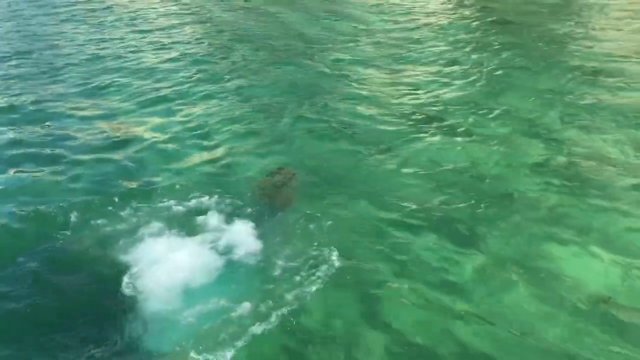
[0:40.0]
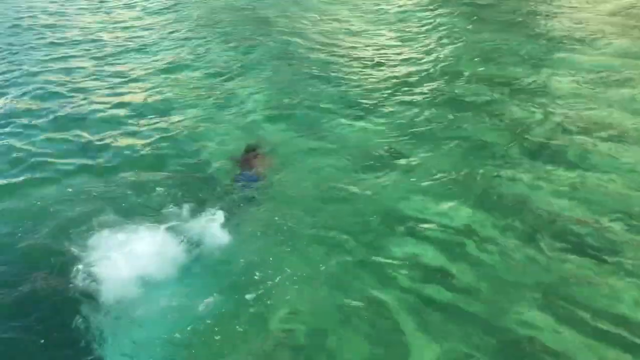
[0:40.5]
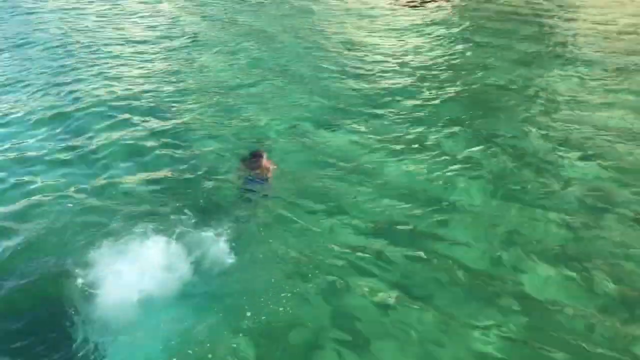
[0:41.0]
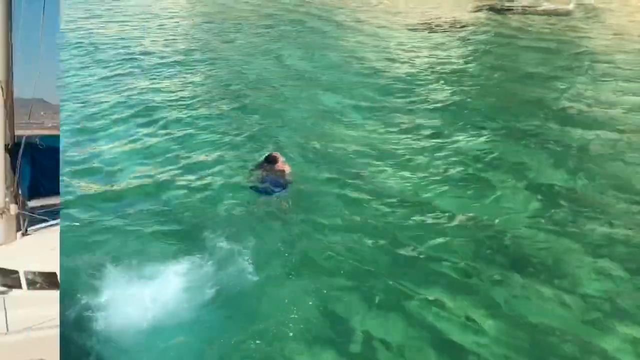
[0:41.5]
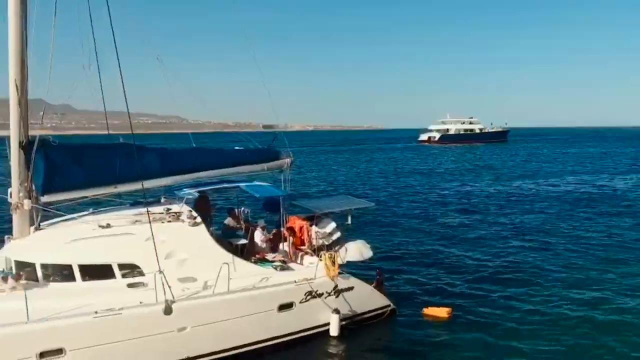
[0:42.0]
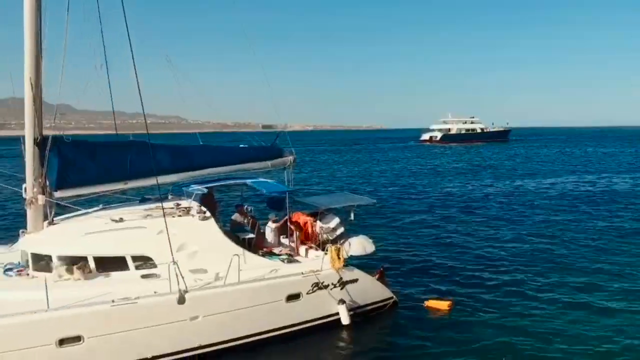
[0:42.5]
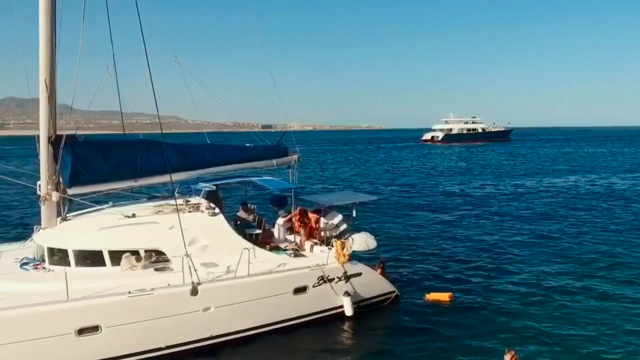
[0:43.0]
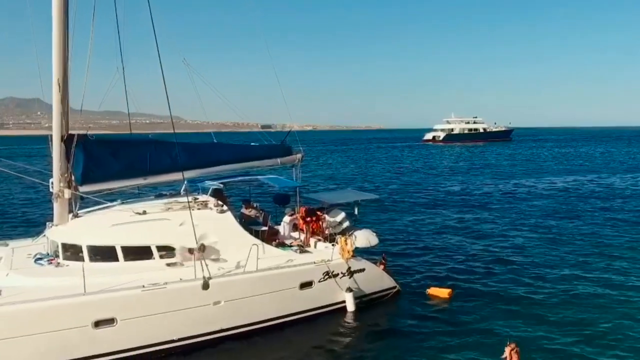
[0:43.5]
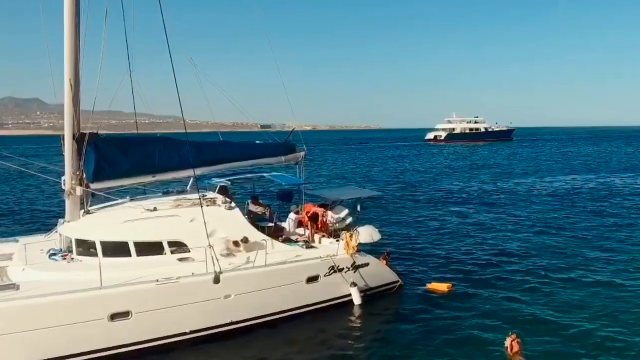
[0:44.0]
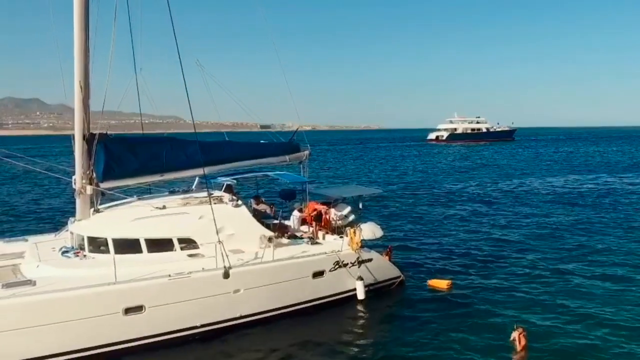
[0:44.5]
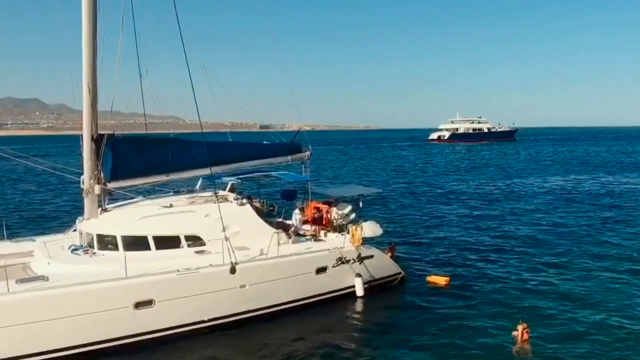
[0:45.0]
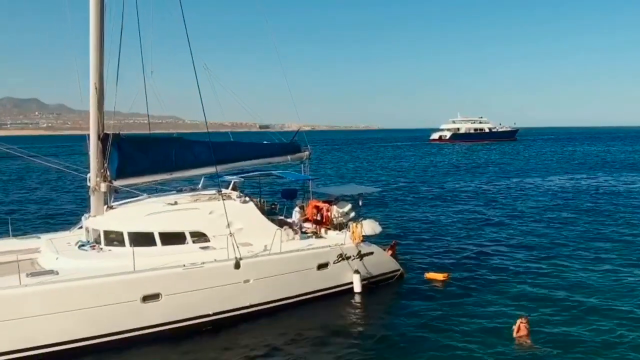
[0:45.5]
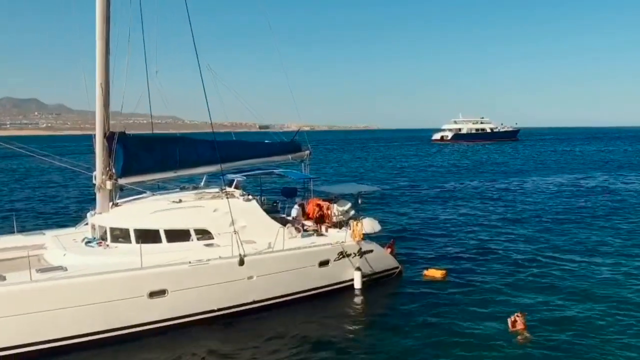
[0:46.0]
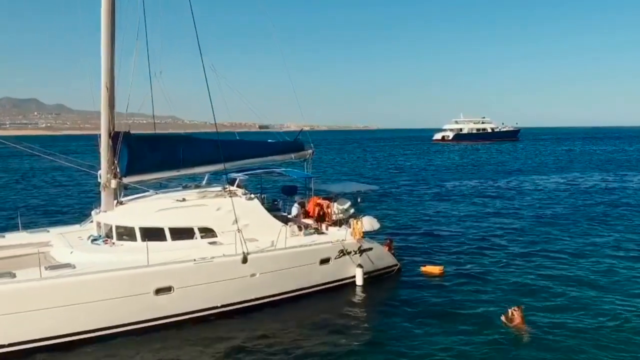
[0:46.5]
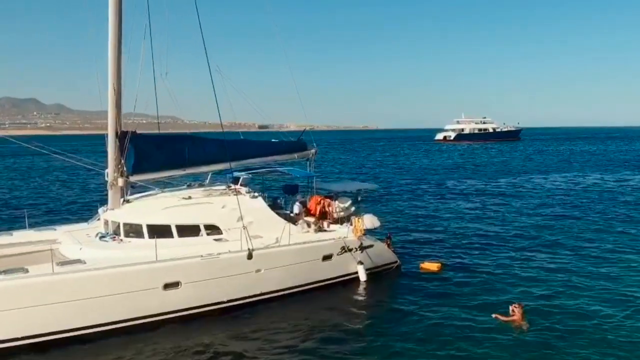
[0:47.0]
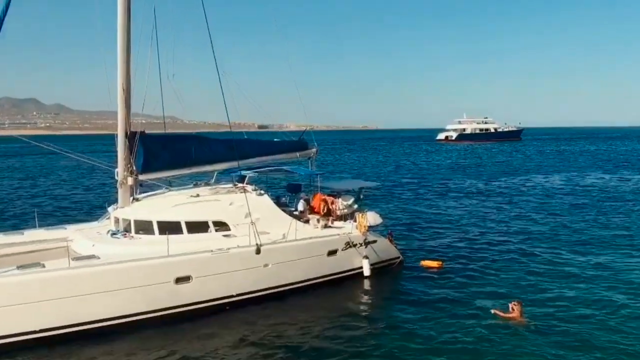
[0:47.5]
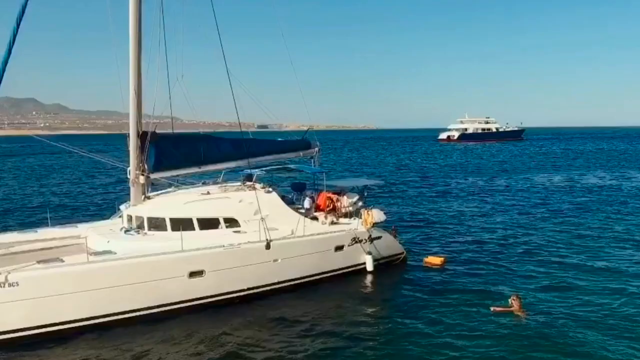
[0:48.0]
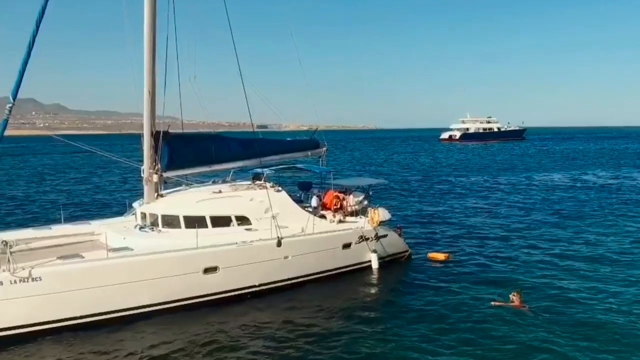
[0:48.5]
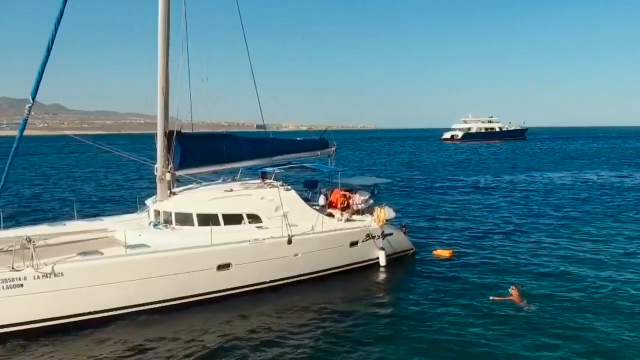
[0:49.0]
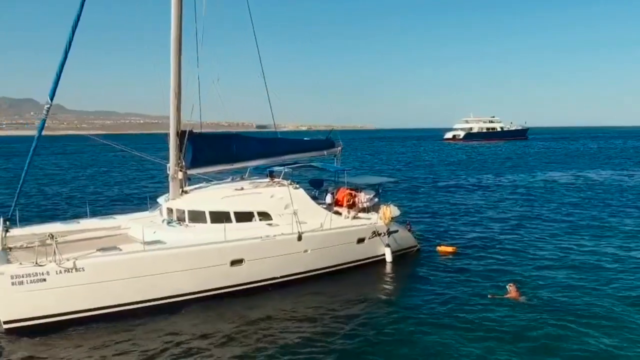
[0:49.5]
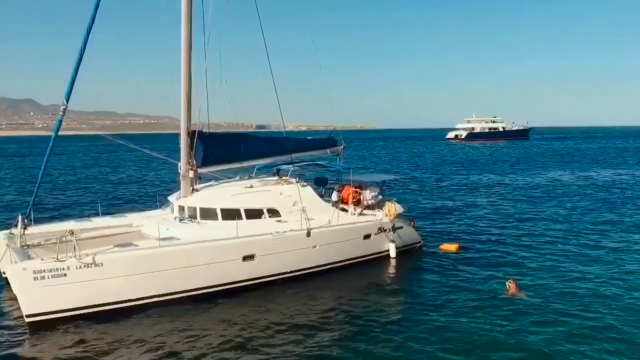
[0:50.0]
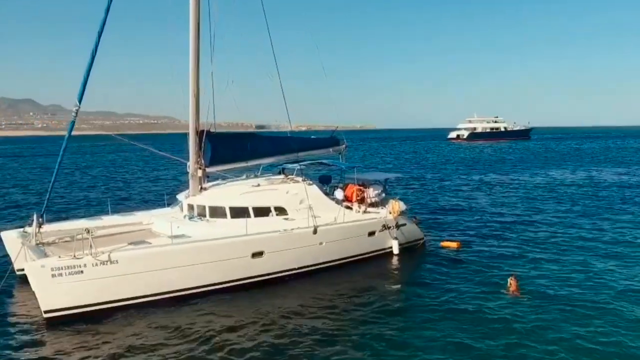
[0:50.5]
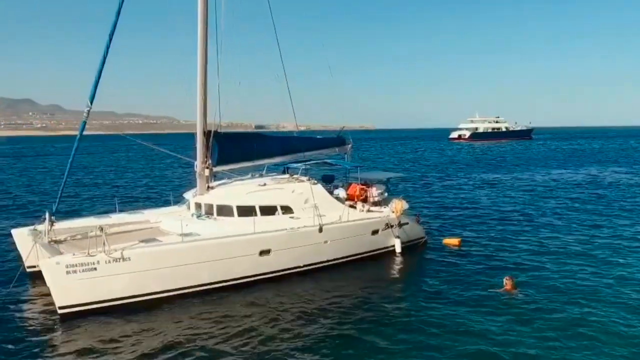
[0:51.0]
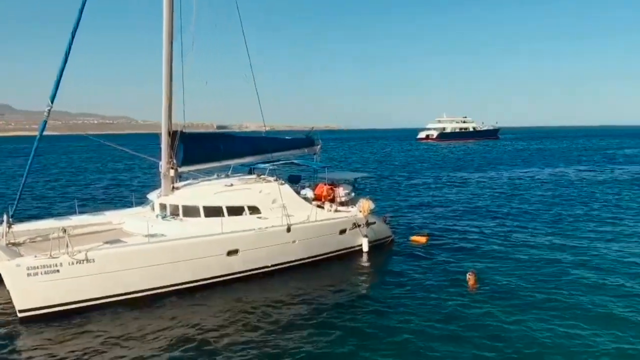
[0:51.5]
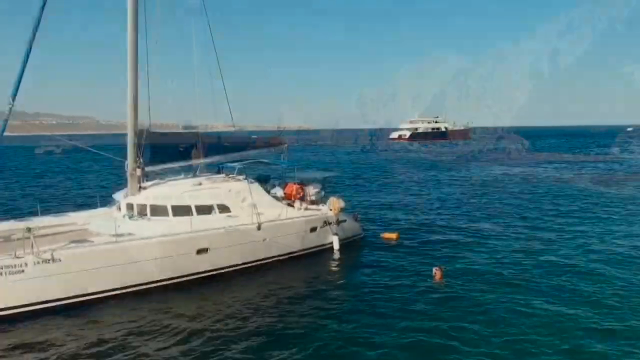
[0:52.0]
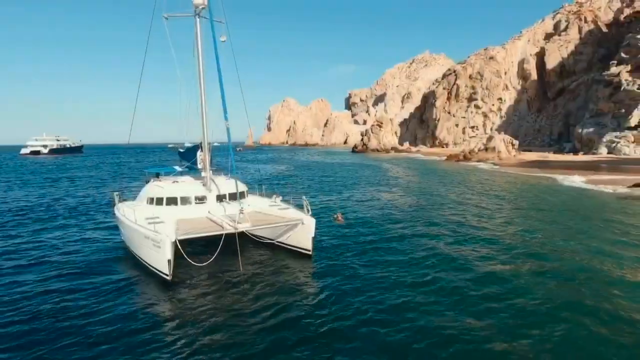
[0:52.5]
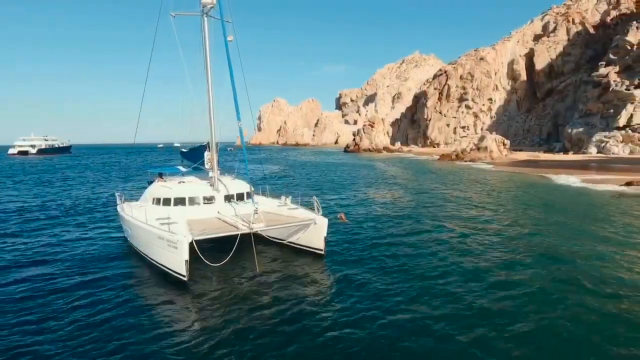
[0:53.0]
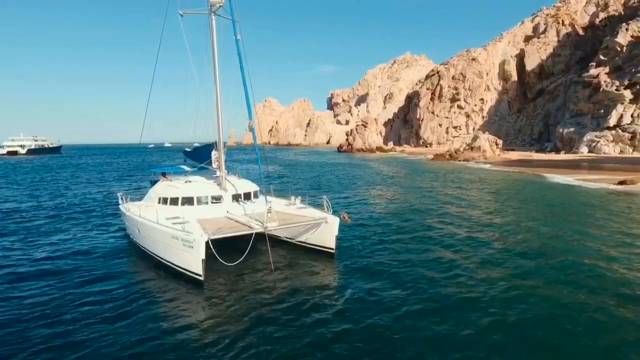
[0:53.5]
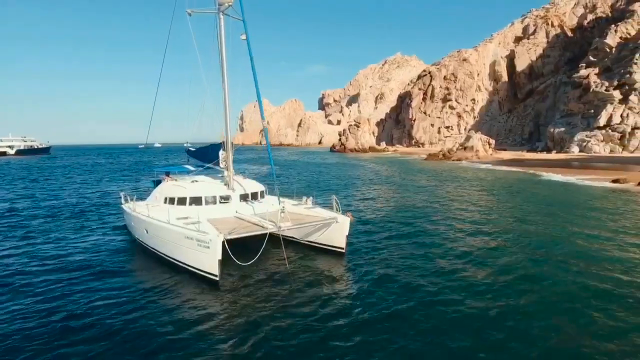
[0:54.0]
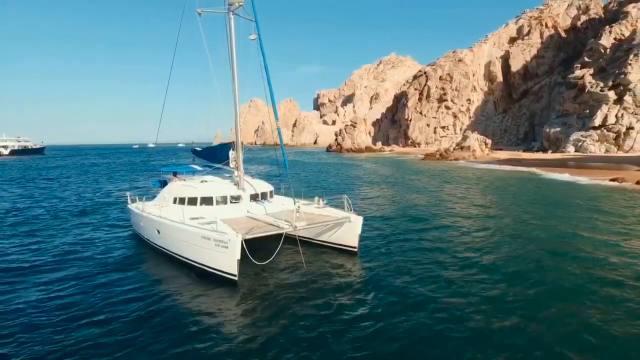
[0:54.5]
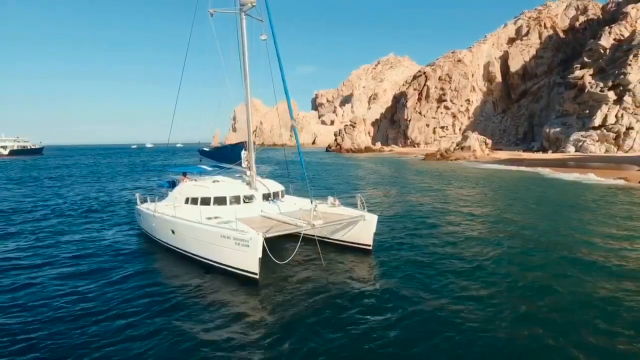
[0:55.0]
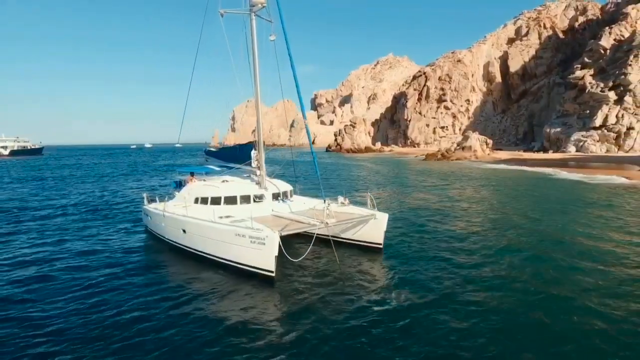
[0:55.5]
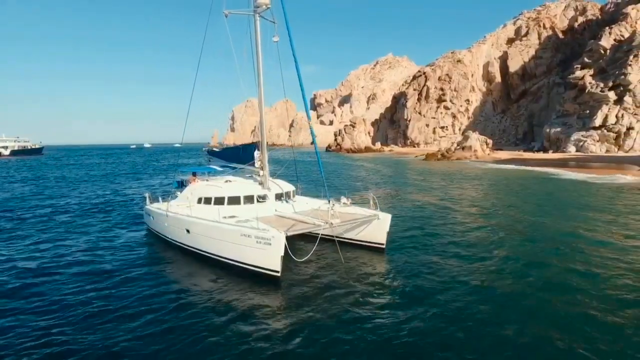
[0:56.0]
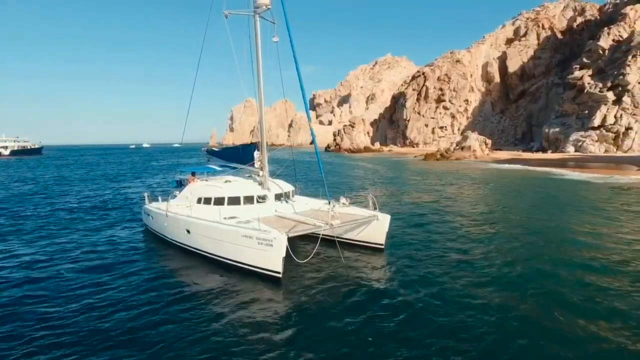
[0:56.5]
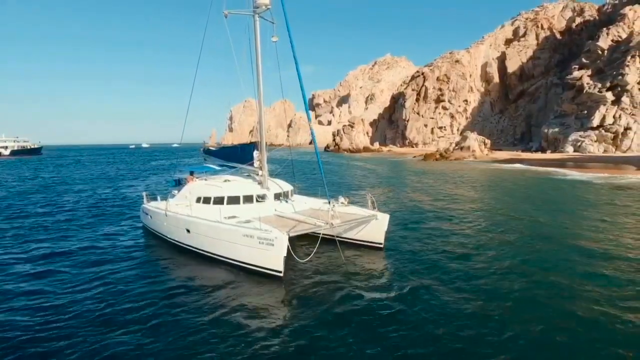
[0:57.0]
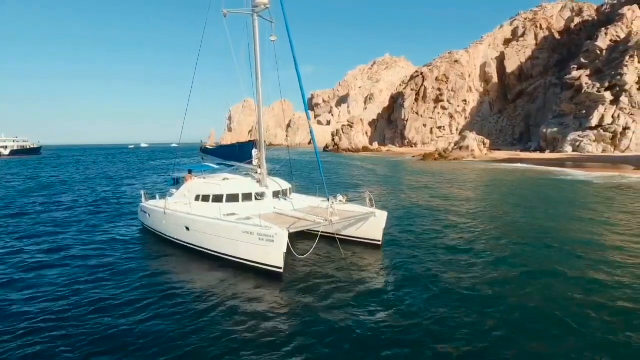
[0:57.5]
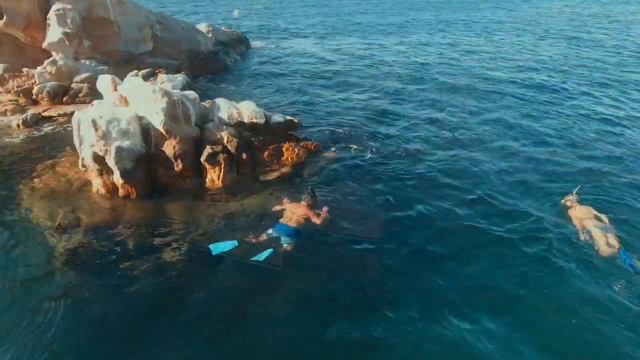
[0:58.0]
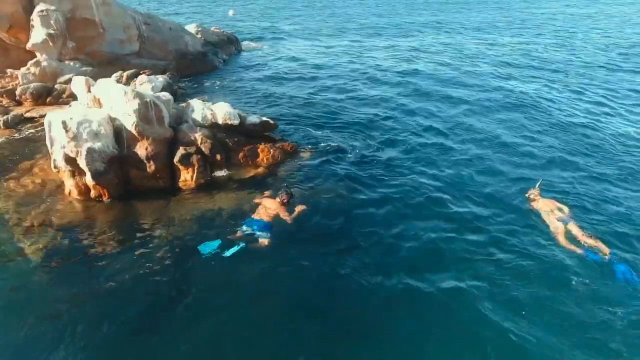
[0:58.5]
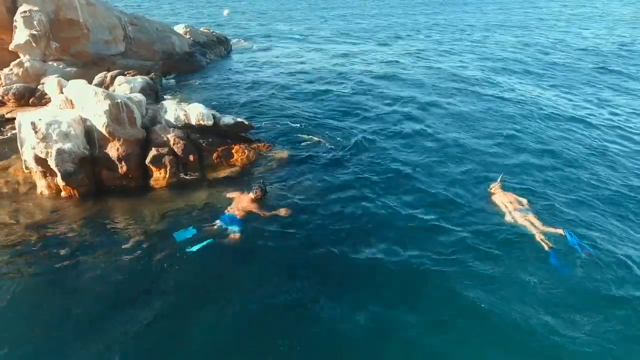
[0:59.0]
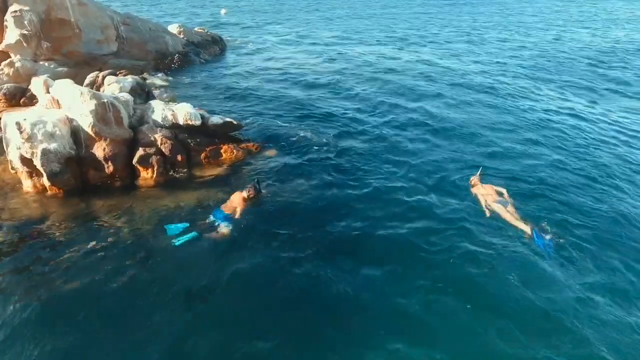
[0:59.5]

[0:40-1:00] A drone films from above the water, recording a white boat. A few people stand on the back of the boat, and its dark blue sail is halfway down. Another boat is in the background, and on the boat closest to the drone a small white and black dog walks along the top. The drone slowly backs up and pans to the right, then records another white boat with brown mountains in the background. Next the drone records two people snorkeling among large rocks sticking out of the water. One person, wearing blue flippers and blue shorts, looks down into the water, and to his right is a woman wearing blue flippers and a gray bikini.